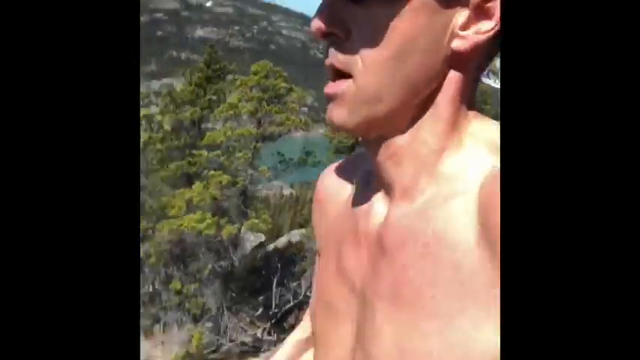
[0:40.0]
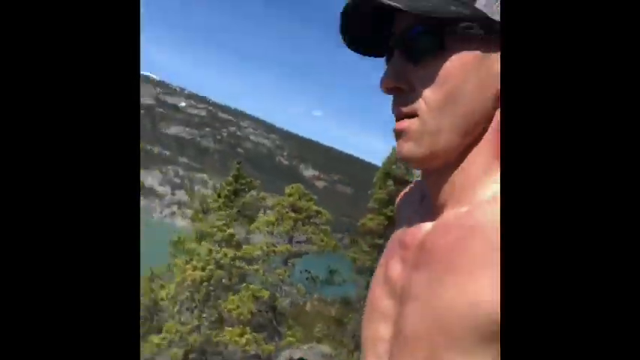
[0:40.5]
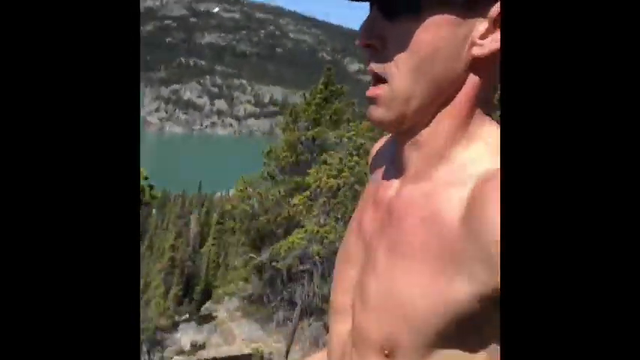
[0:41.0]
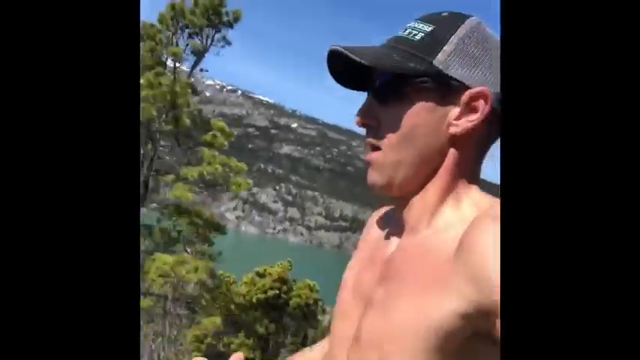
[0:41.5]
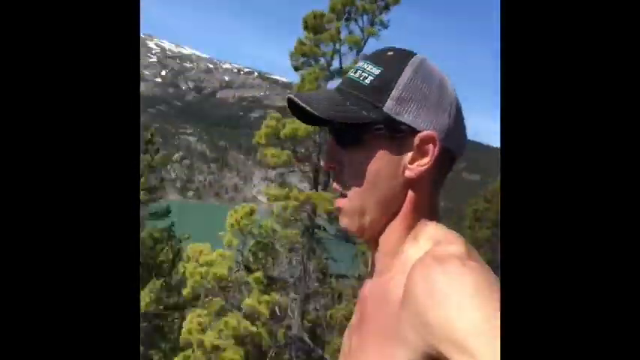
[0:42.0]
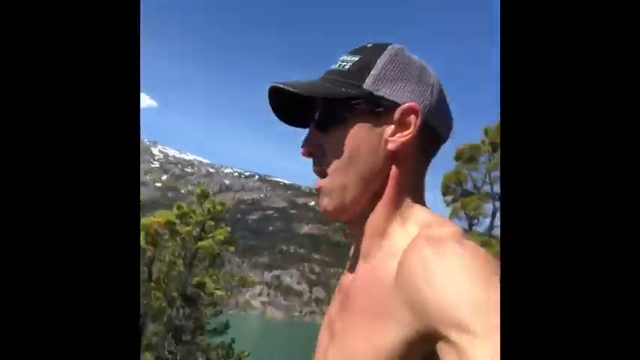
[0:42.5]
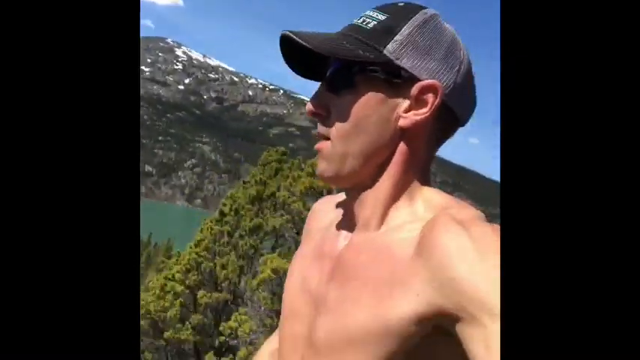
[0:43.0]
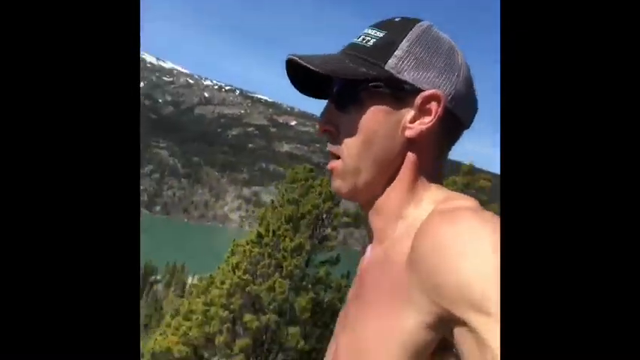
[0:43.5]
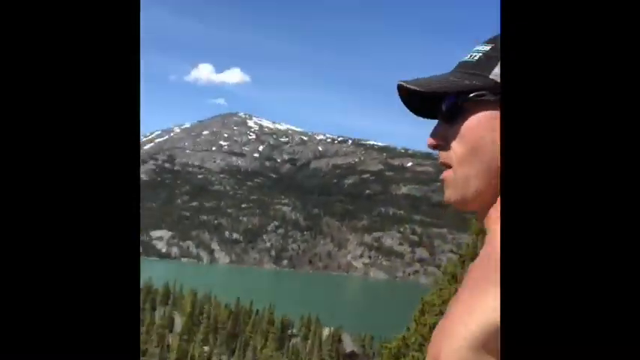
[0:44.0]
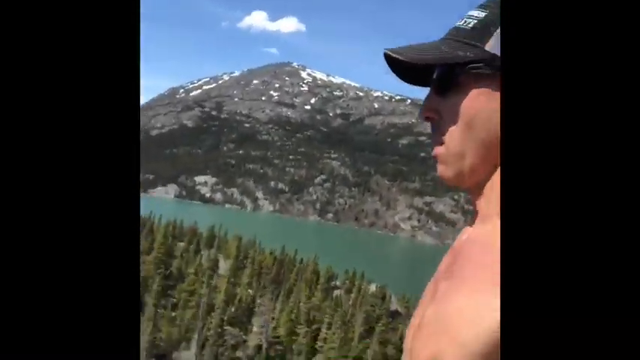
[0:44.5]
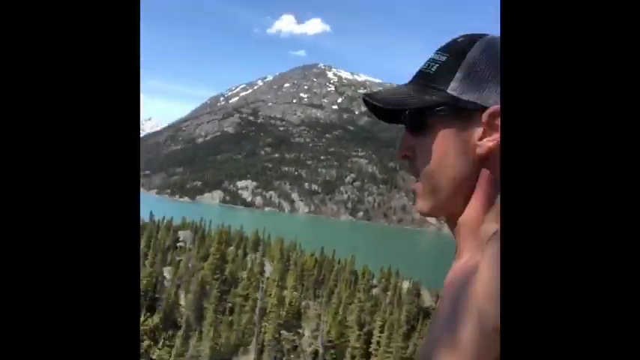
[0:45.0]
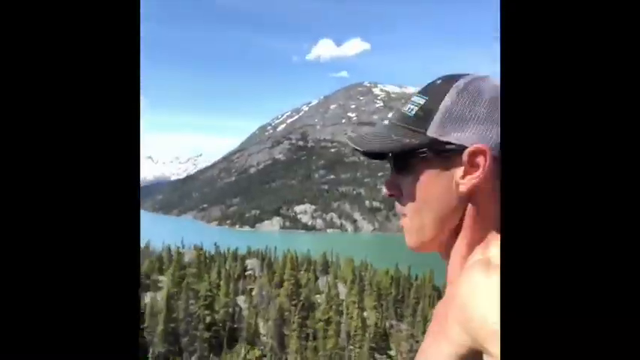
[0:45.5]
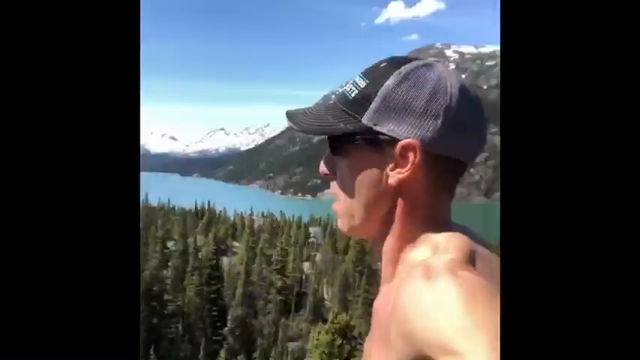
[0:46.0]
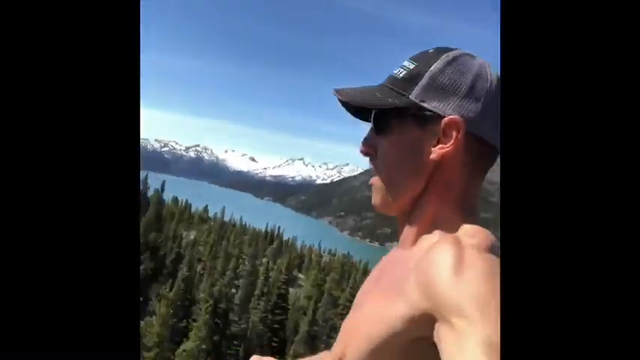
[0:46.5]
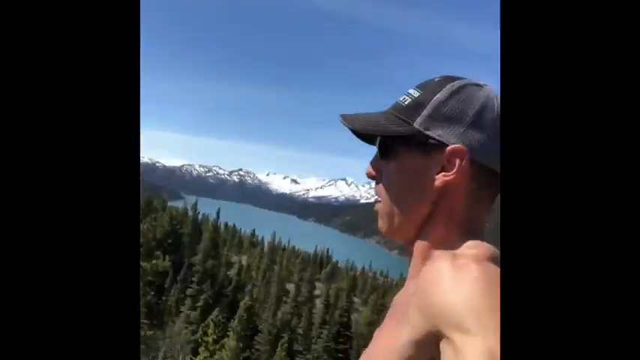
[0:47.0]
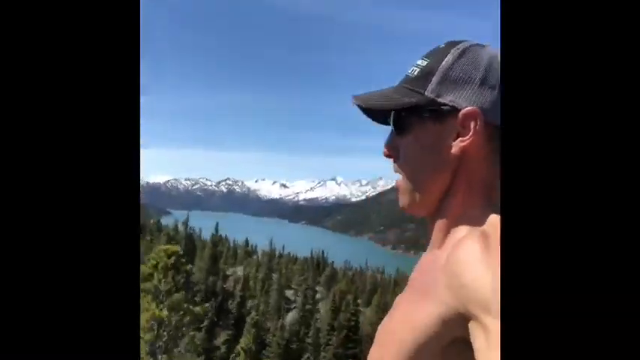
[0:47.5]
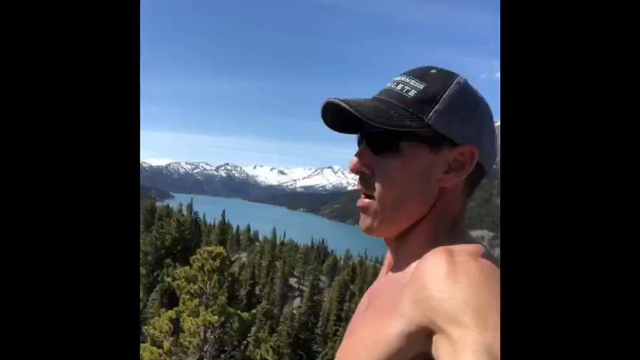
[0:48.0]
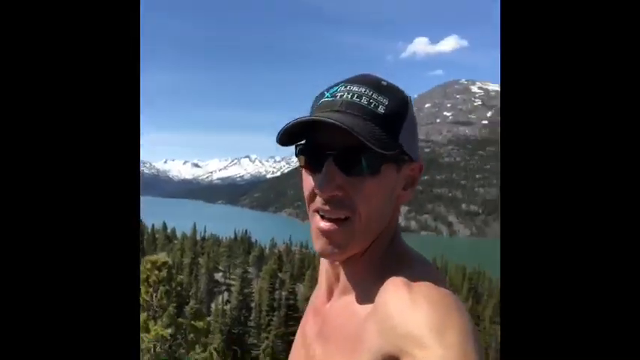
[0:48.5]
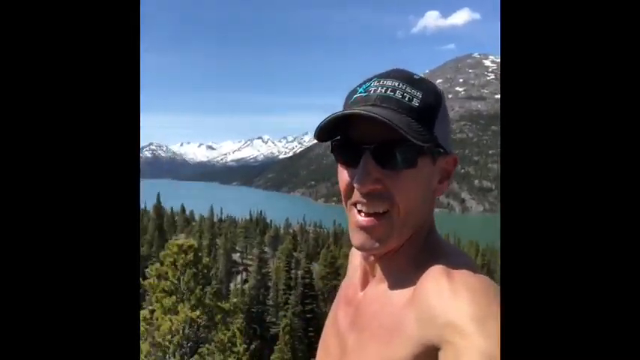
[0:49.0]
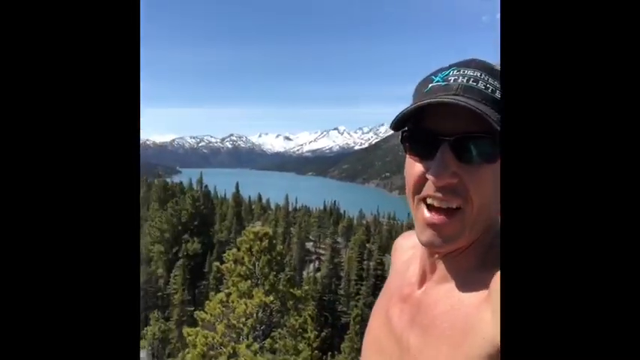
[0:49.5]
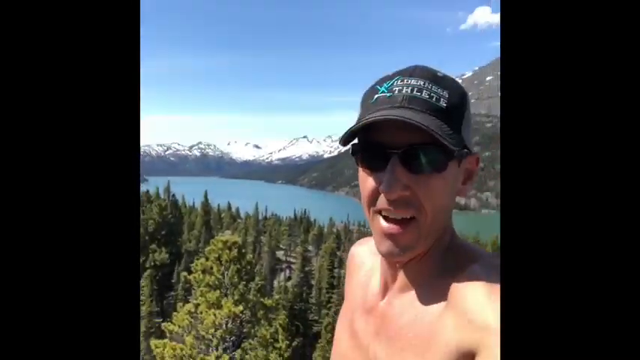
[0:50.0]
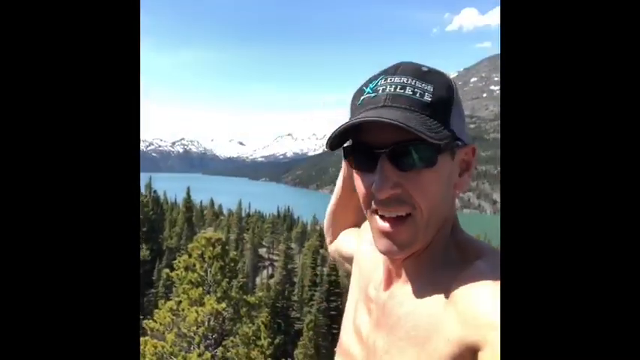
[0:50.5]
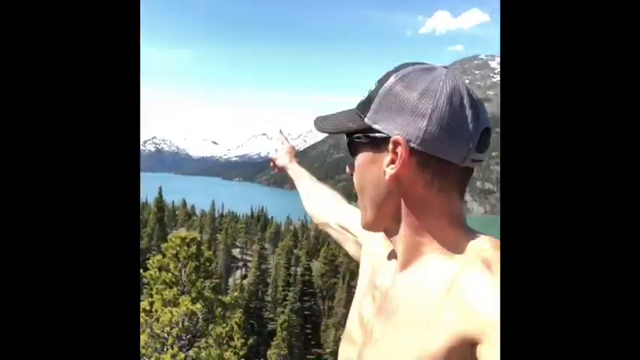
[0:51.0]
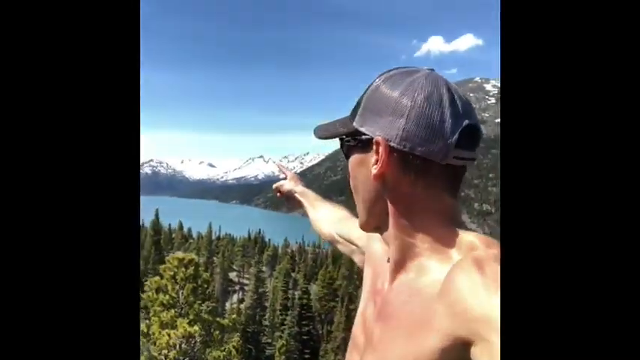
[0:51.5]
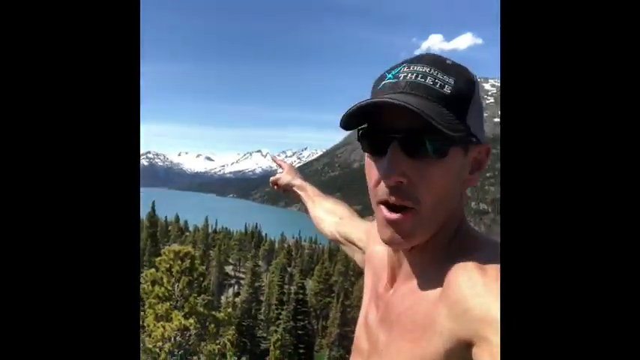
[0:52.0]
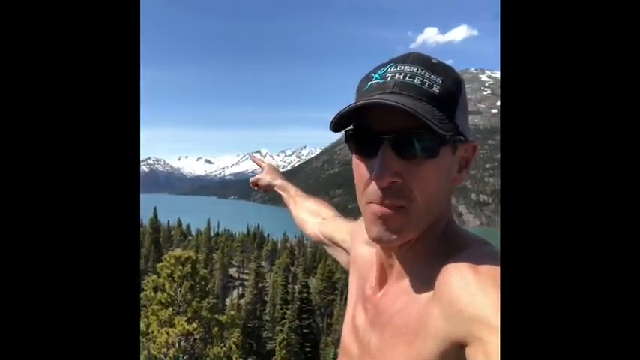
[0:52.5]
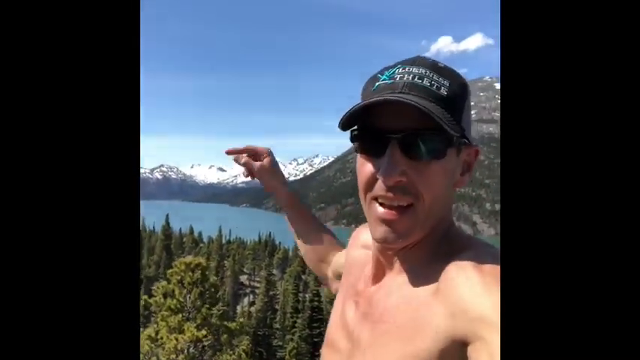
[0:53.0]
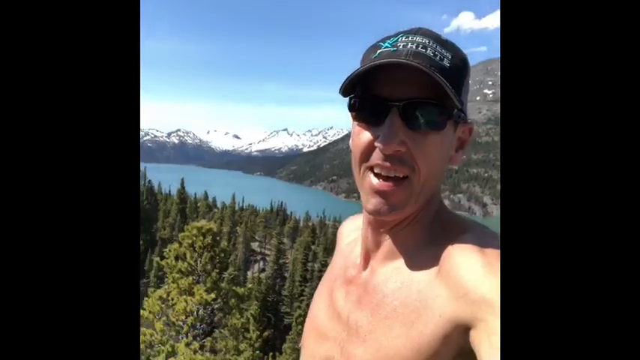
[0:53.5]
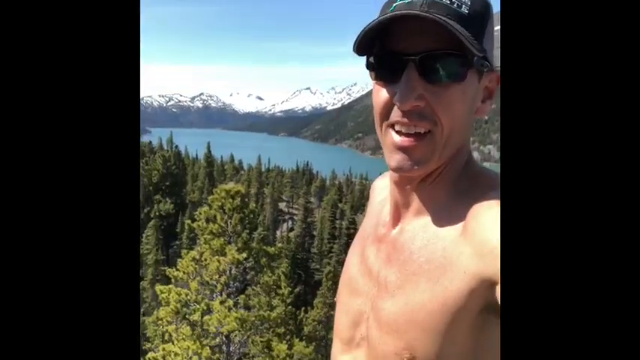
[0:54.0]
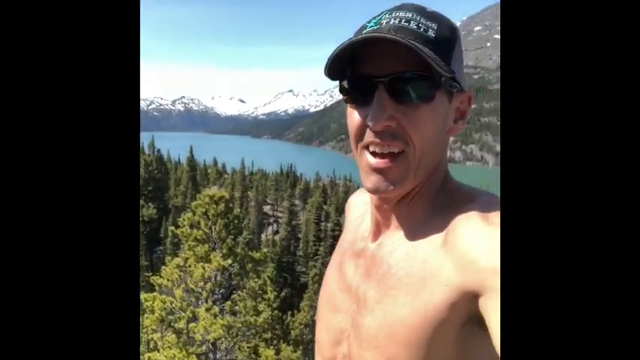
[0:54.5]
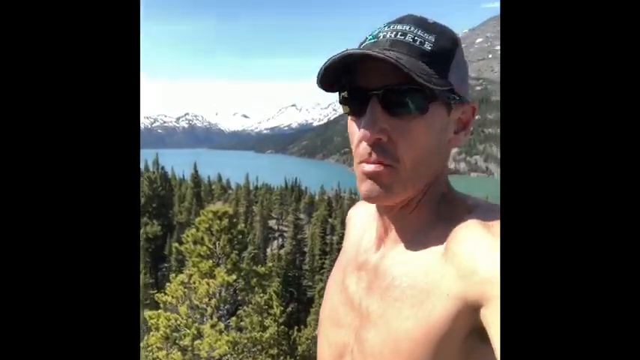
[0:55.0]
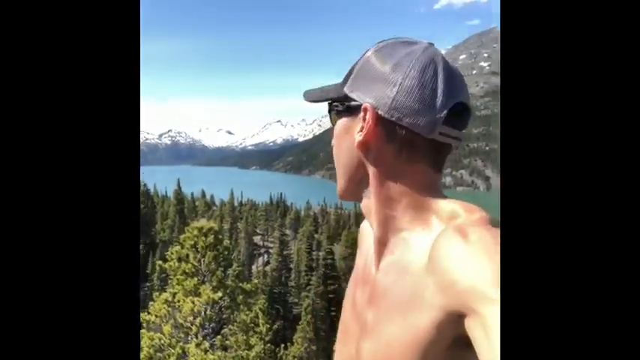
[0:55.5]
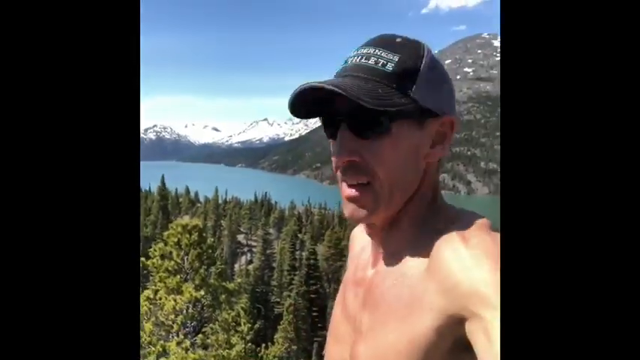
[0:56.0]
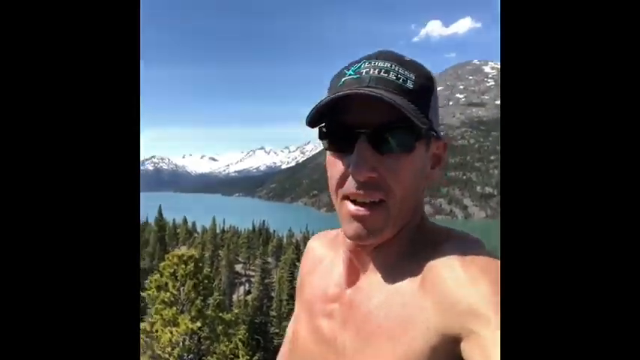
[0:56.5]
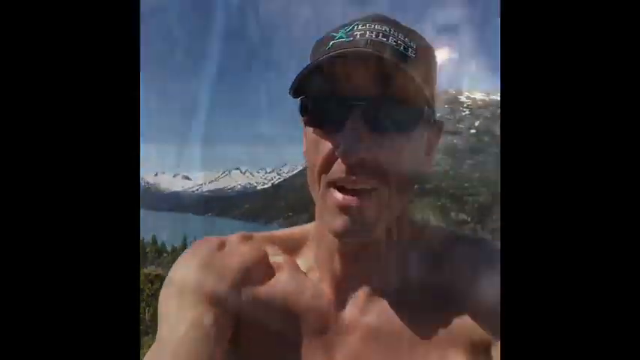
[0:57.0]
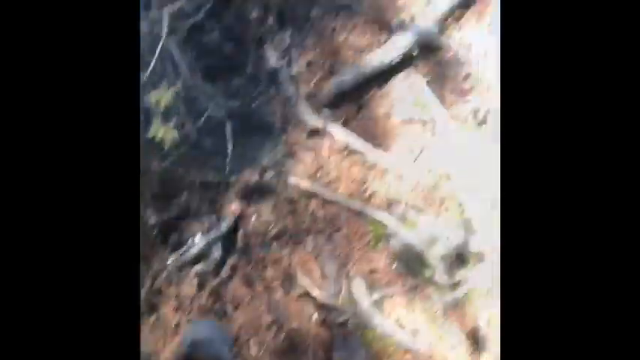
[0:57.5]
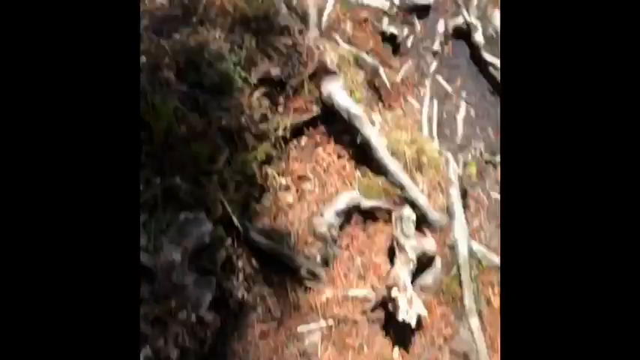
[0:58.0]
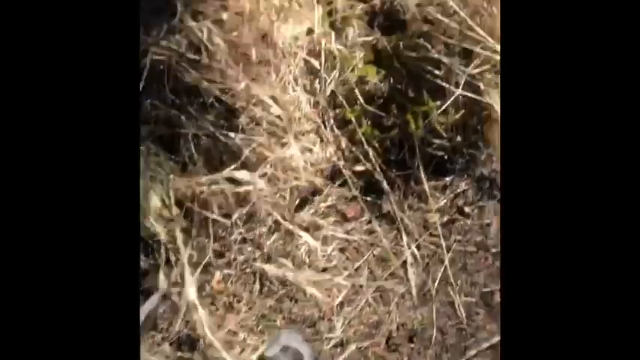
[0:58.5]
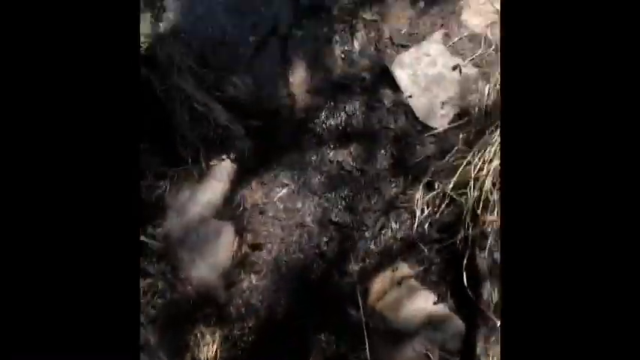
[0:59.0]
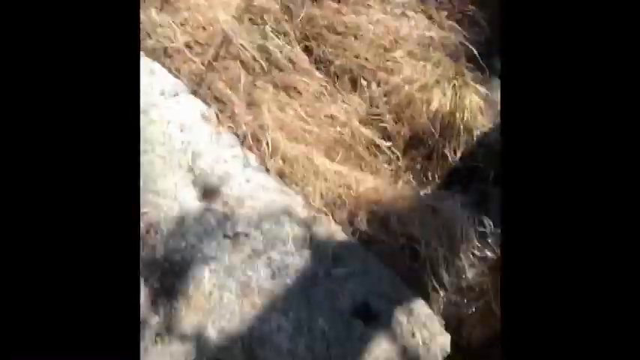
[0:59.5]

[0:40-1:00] The head and shoulders of a bare-chested man in a black baseball cap are seen on the right-hand side as he runs. Behind him are trees, a forest, possibly a lake behind the forest, and a single steep mountain wall rising to the skyline. The camera follows behind him, jiggling significantly, and his gait makes him jump up and down. He stops and looks toward the camera, showing that he wears sunglasses, speaks, and lifts his right hand to point toward the mountains in the background. The view fades out, and then the camera faces the ground, with stone underfoot. The man is running again while holding the camera, which moves significantly, and occasionally a sneaker steps forward onto the ground below.